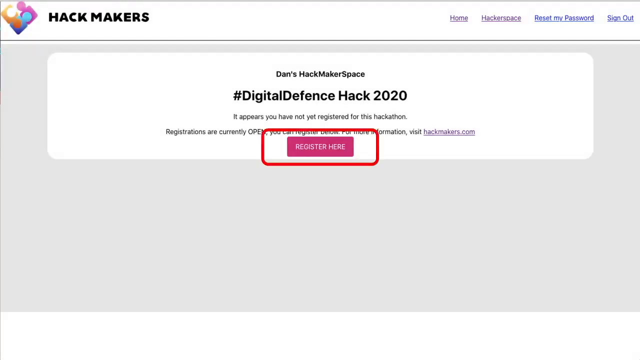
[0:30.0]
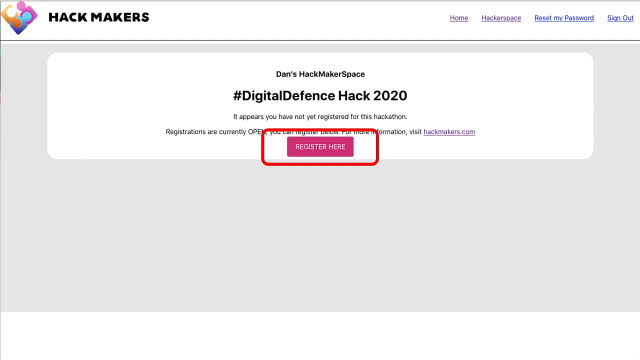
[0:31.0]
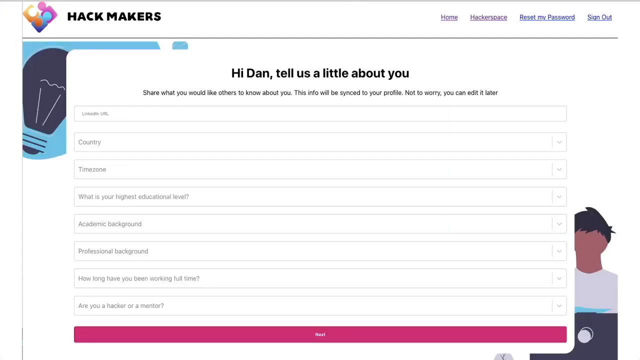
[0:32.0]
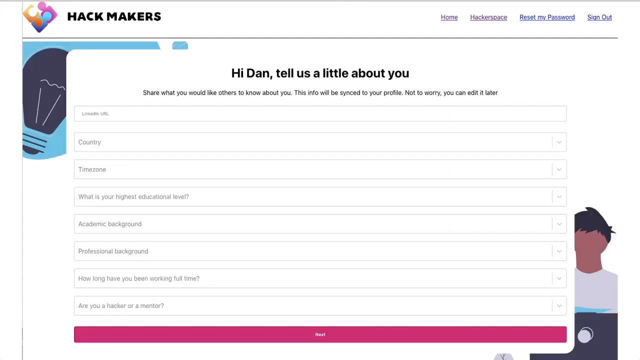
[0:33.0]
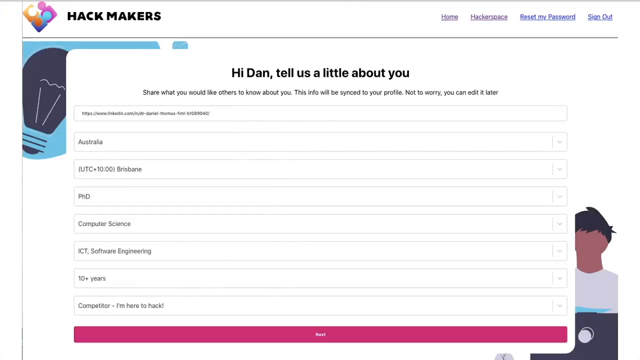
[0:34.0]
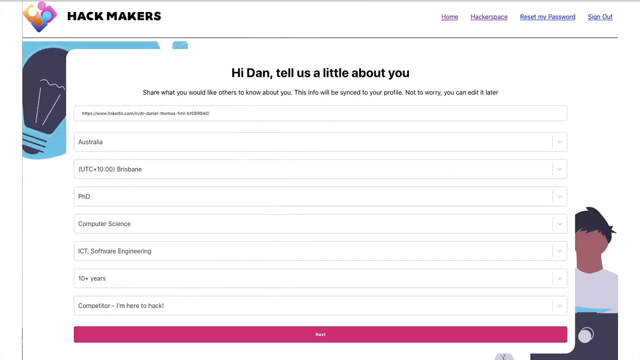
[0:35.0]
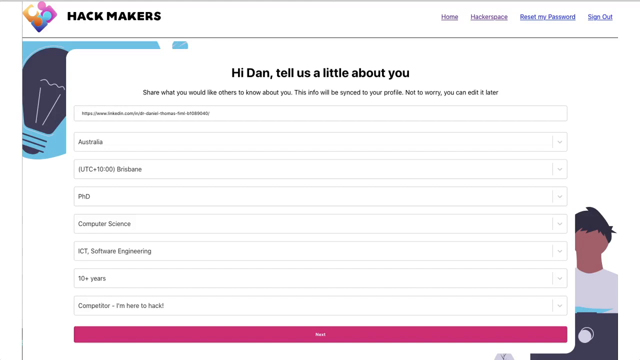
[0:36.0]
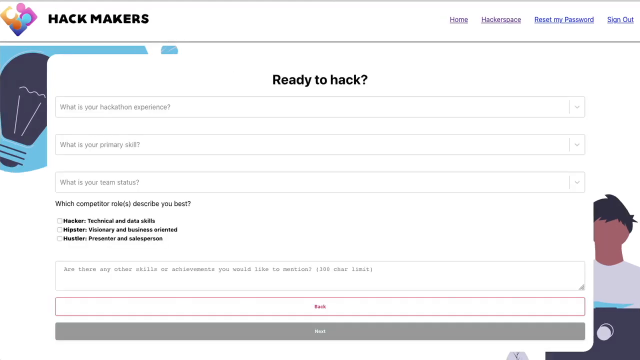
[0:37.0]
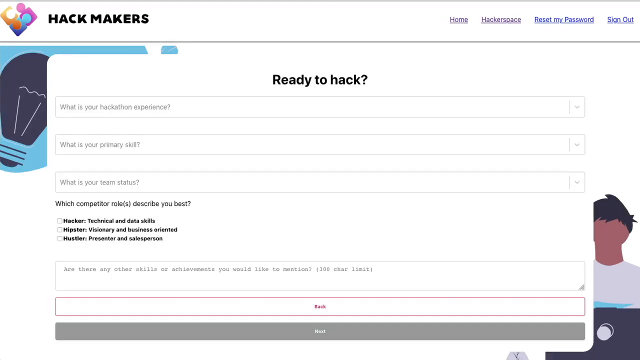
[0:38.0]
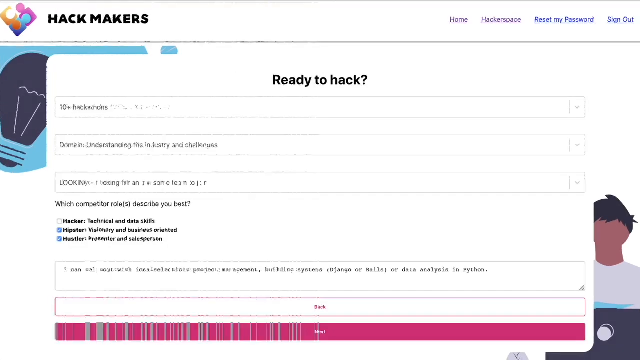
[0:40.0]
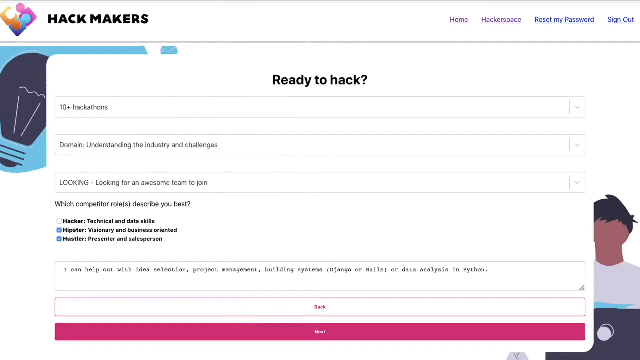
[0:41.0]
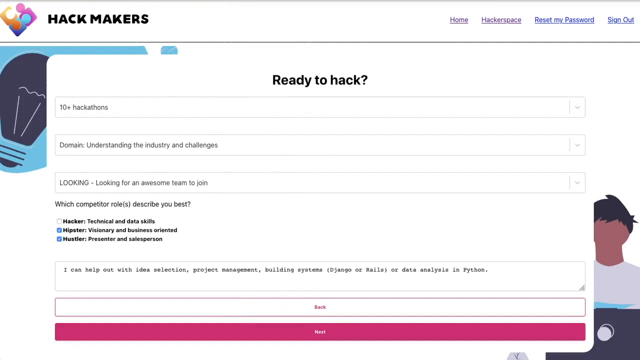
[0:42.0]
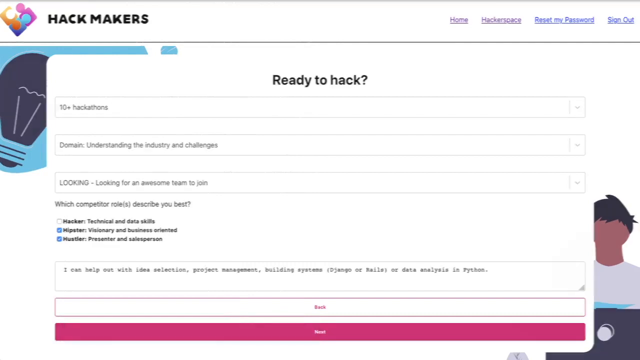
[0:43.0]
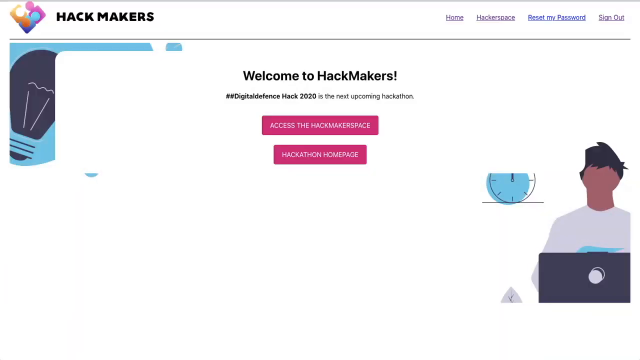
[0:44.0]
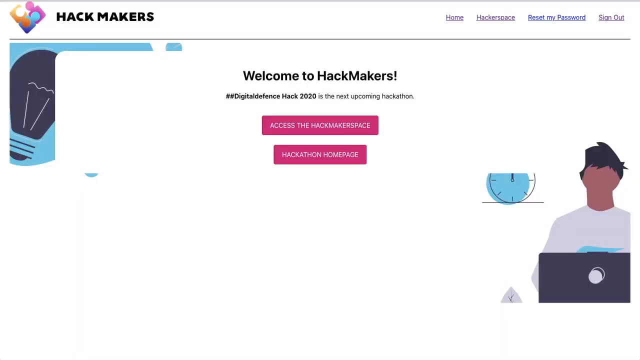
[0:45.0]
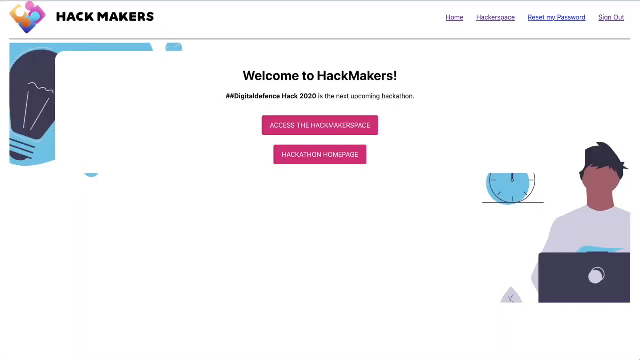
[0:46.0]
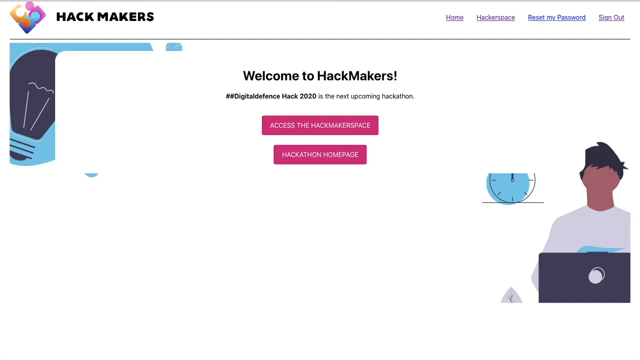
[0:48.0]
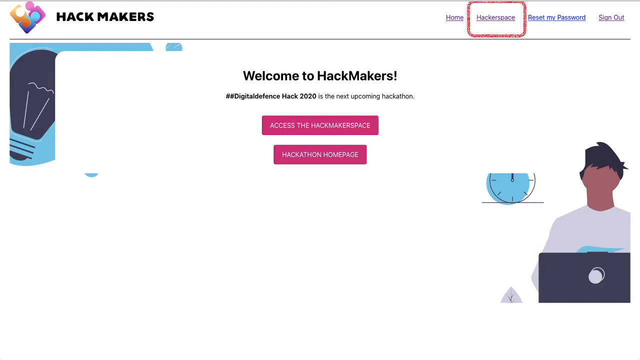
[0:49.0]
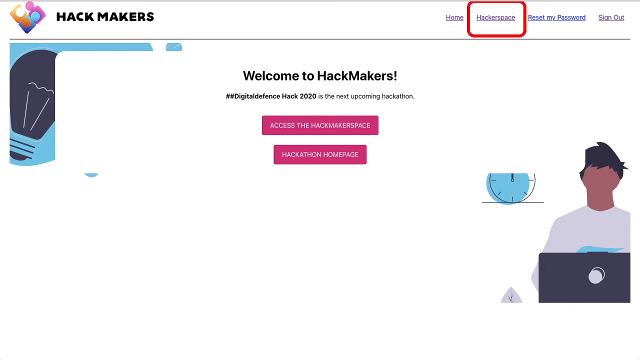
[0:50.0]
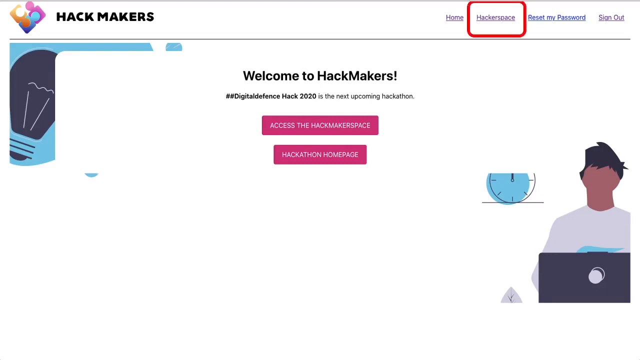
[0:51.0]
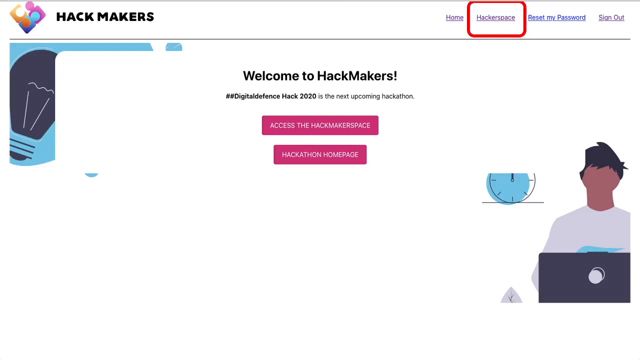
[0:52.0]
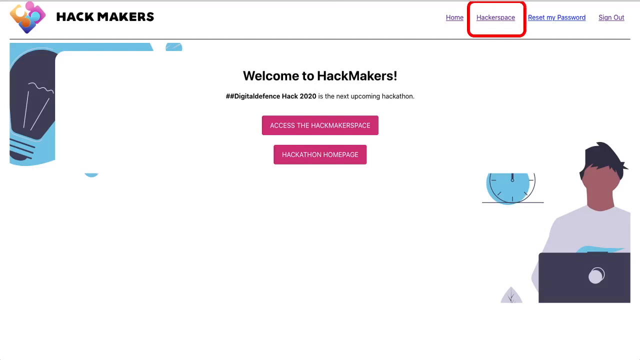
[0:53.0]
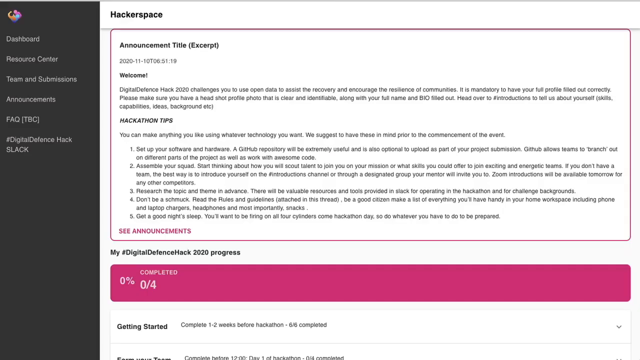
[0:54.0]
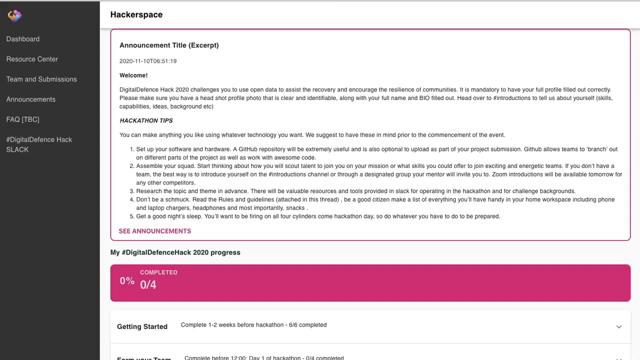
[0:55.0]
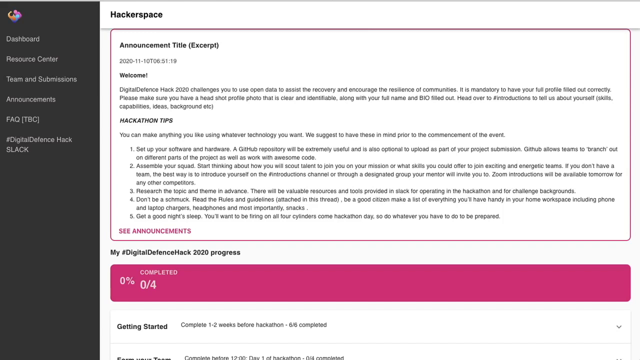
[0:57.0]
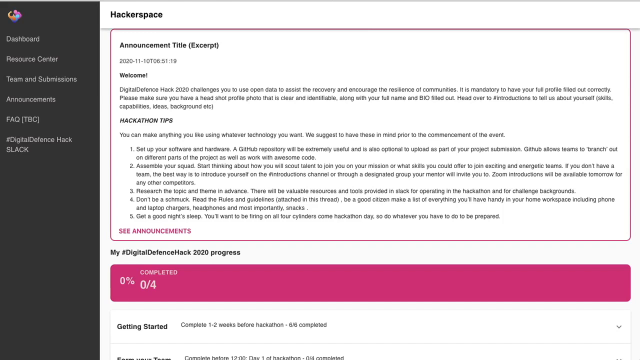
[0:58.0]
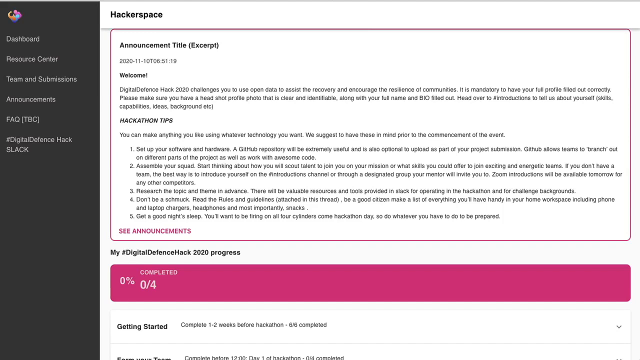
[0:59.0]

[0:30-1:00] The Hackmakers webpage displays information reading "Dan's Hackmaker Space," "#DigitalDefenseHack2020," "It appears you have not yet registered for this hackathon," "Registrations are currently open," "You can register now," "For more information, visit Hackmakers.com" and "Register here." The "Register here" button is pink, and a red outline box highlights it. After the user clicks the button, the registration page appears, reading "Hi Dan, tell us about you," "Share what you would like others to know about you," "This info will be synced to your profile" and "Not to worry, you can edit later." The form asks for country, timezone, highest level of education, academic background, professional background, how long the person has been working full time, and whether they are a hacker or a mentor. The details are then filled in: the user is from Australia, the timezone is +10 Brisbane, the academic record is PhD, the profession is computer science, the work experience is 10 years, and the reason for registering is to hack. The page changes to one reading "ready to hack," with a different form of checkboxes and two buttons at the bottom, back and next. The user hits next, and a welcome page appears reading "welcome to Hackmakers," with two buttons, "access the Hackmakers space" and "Hackathon homepage." A highlight marks the top right button, "Hacker Space."